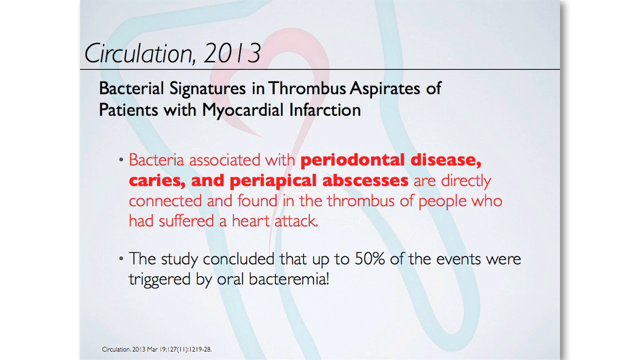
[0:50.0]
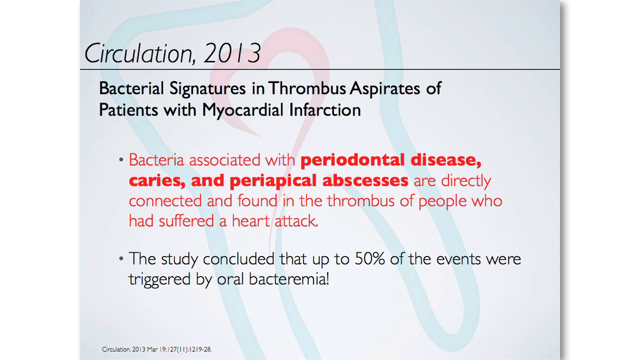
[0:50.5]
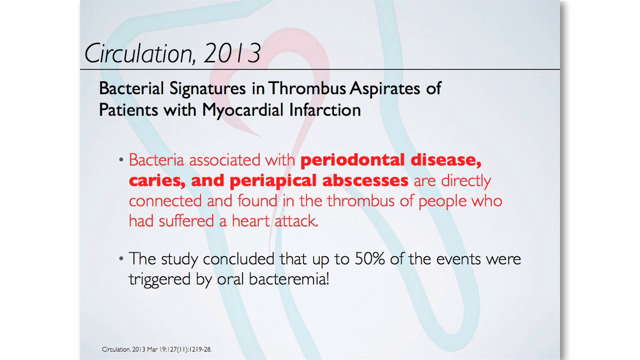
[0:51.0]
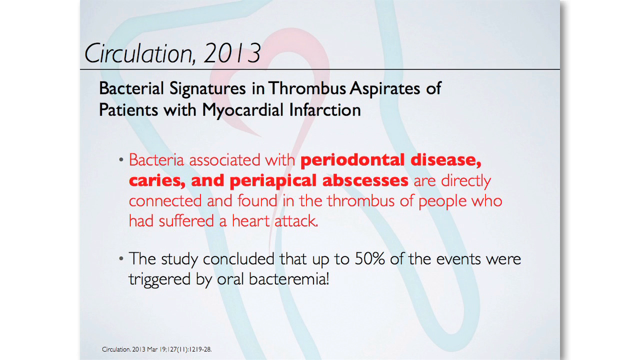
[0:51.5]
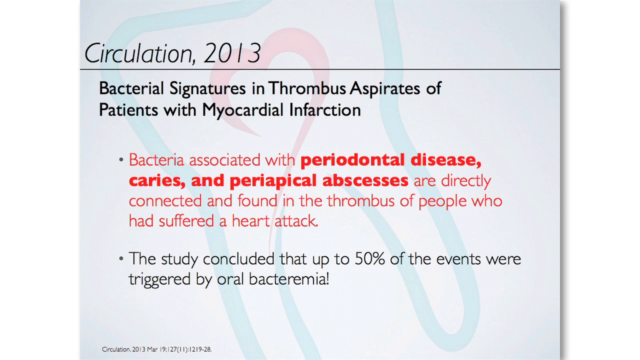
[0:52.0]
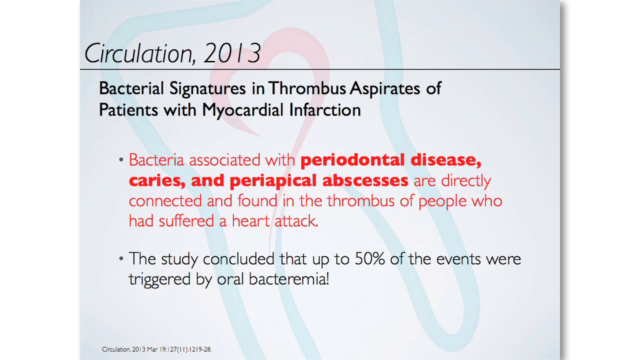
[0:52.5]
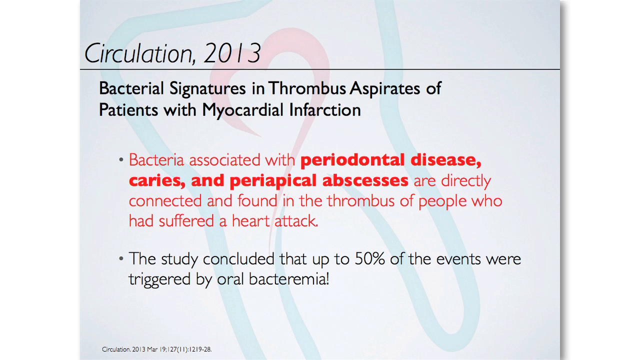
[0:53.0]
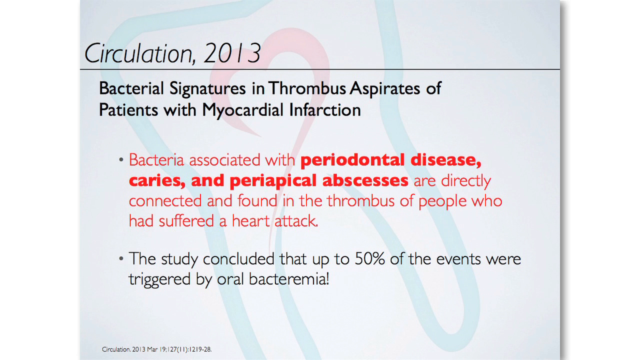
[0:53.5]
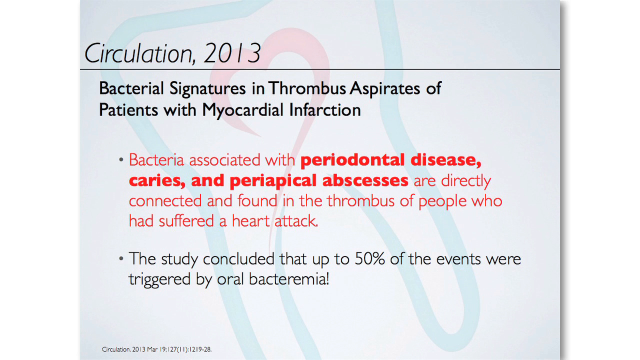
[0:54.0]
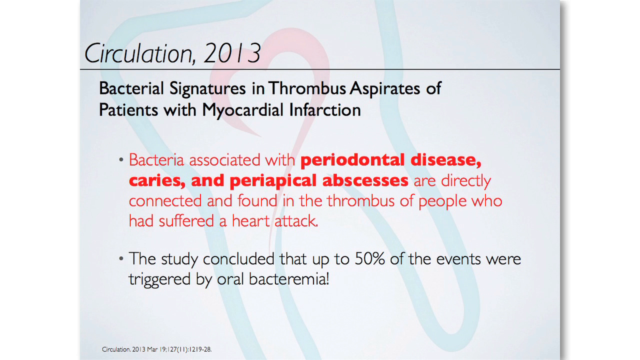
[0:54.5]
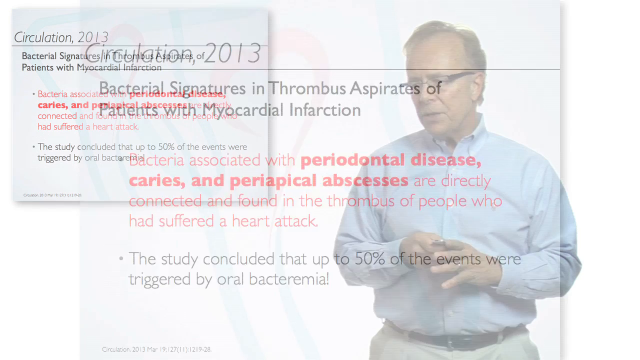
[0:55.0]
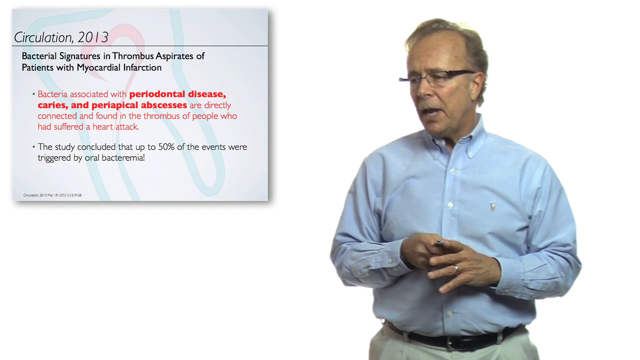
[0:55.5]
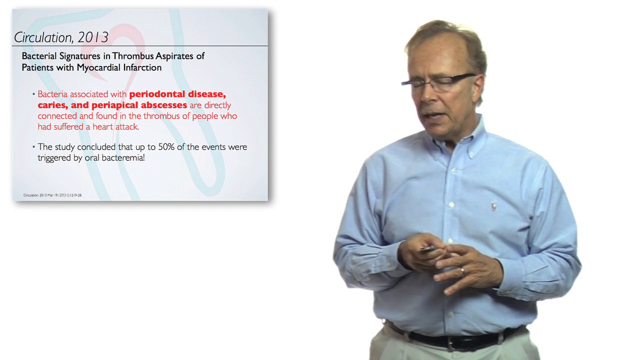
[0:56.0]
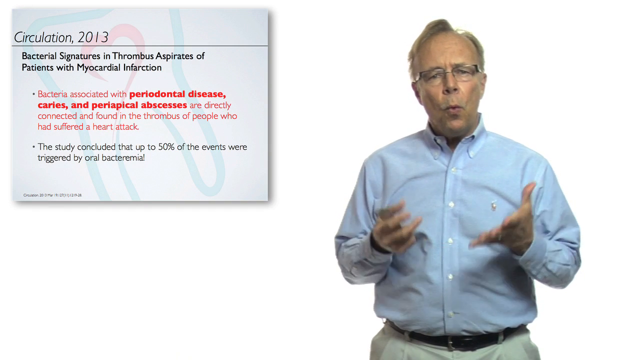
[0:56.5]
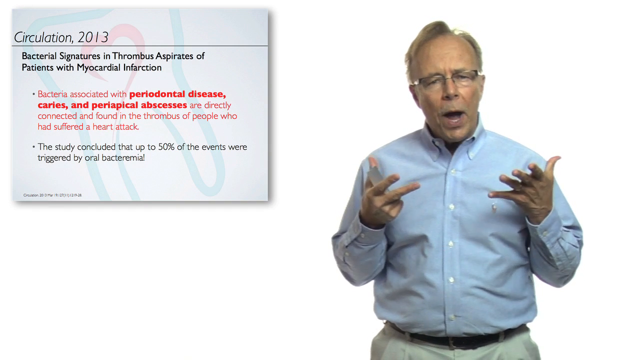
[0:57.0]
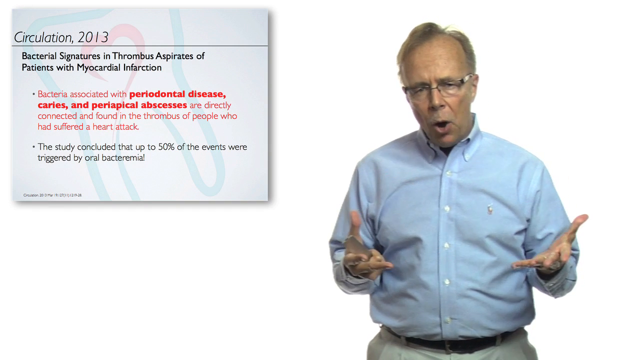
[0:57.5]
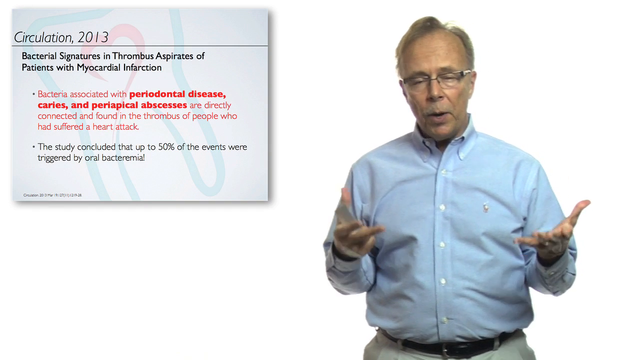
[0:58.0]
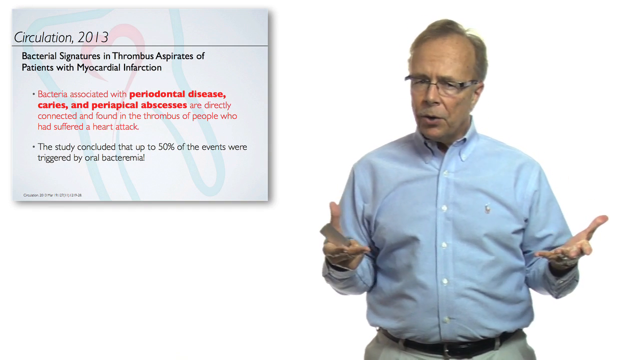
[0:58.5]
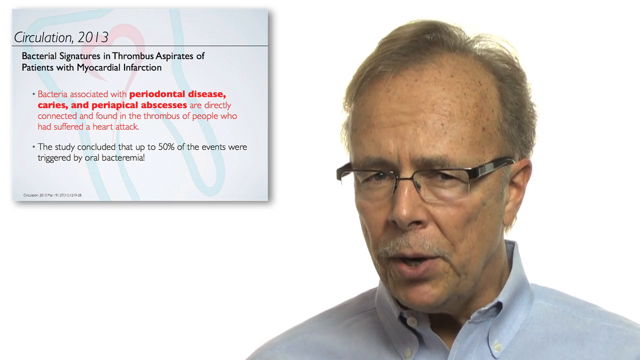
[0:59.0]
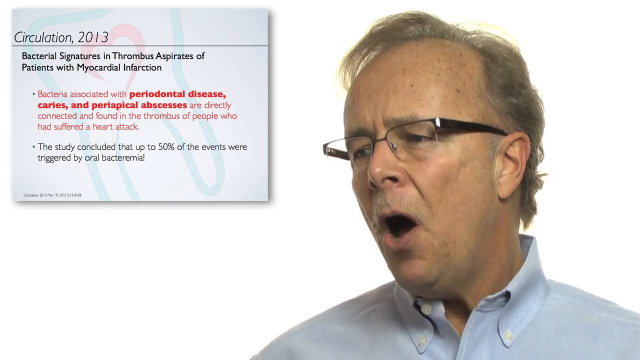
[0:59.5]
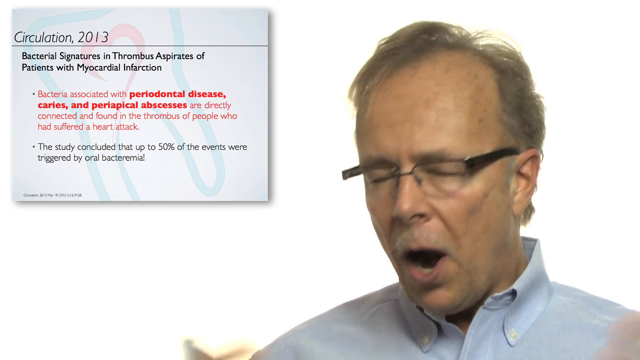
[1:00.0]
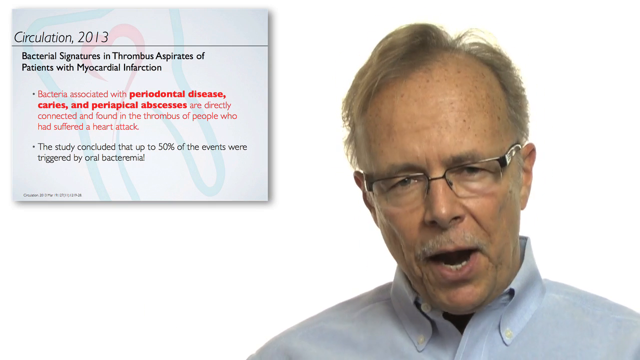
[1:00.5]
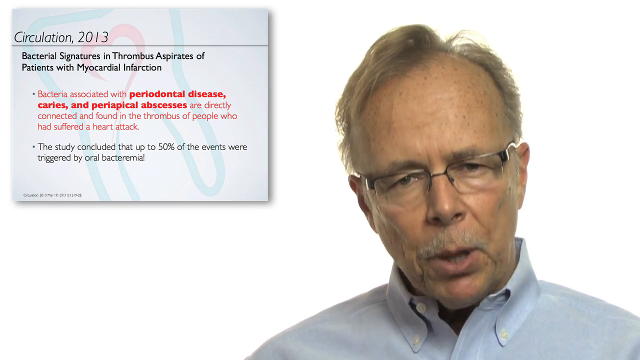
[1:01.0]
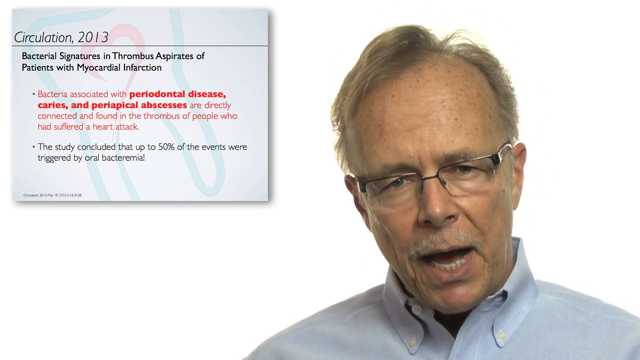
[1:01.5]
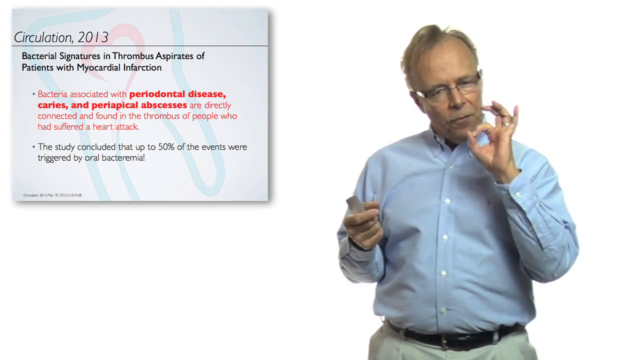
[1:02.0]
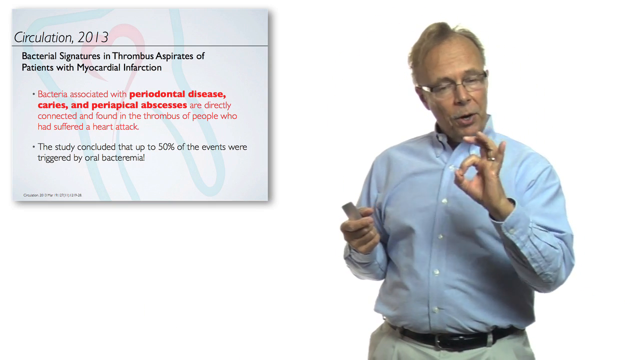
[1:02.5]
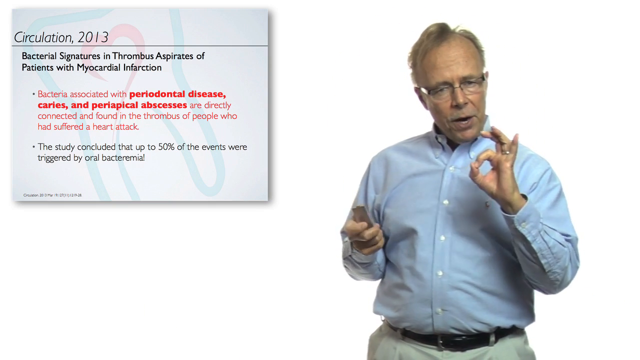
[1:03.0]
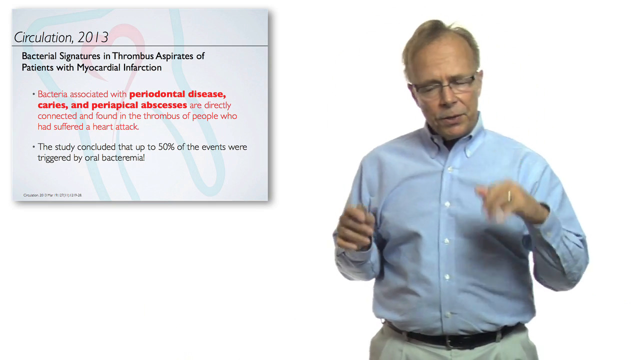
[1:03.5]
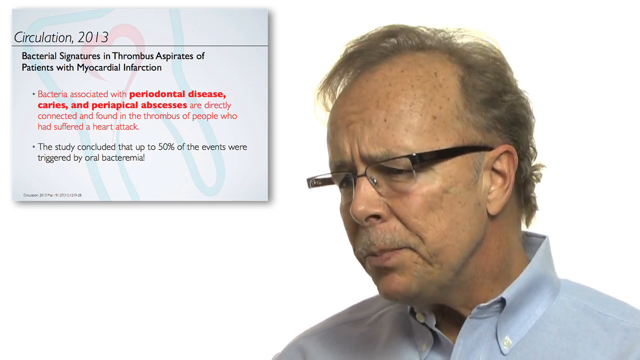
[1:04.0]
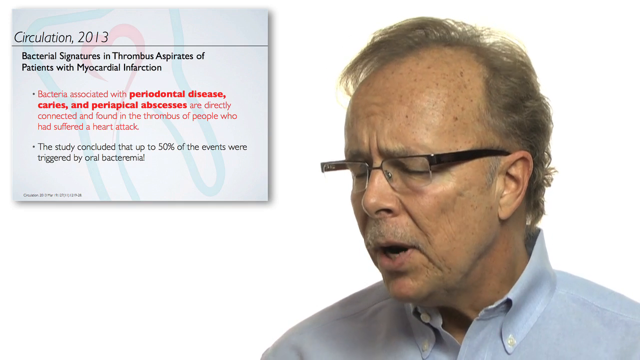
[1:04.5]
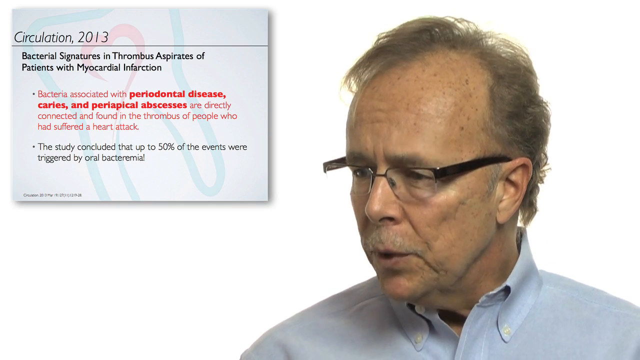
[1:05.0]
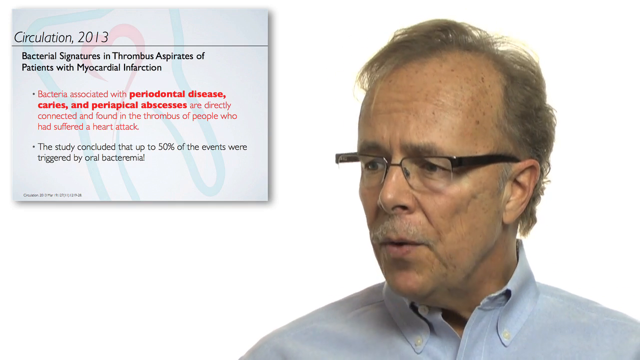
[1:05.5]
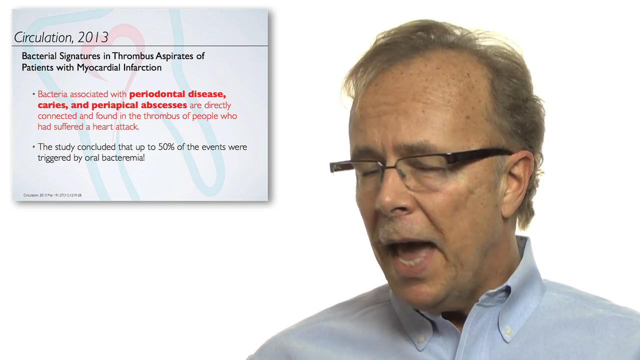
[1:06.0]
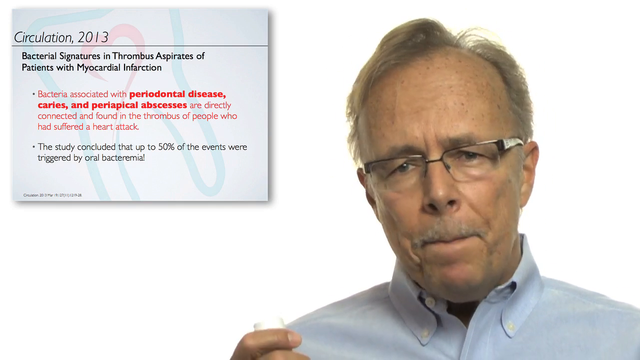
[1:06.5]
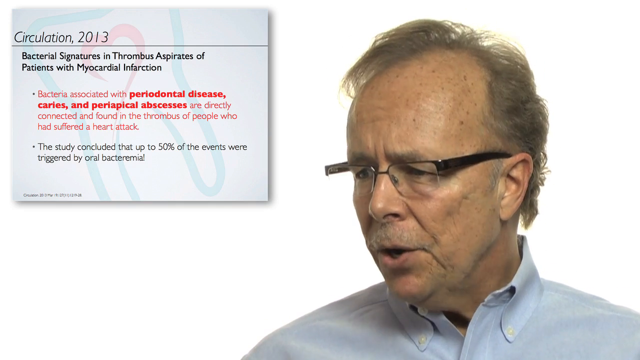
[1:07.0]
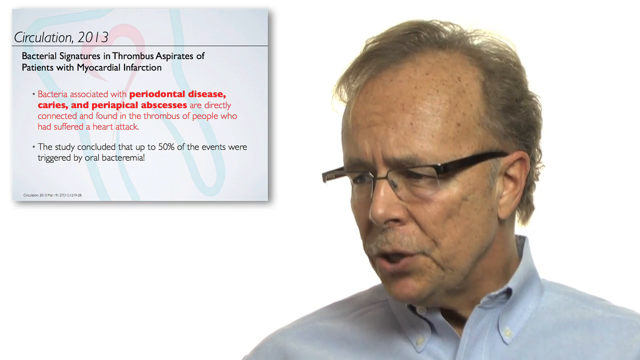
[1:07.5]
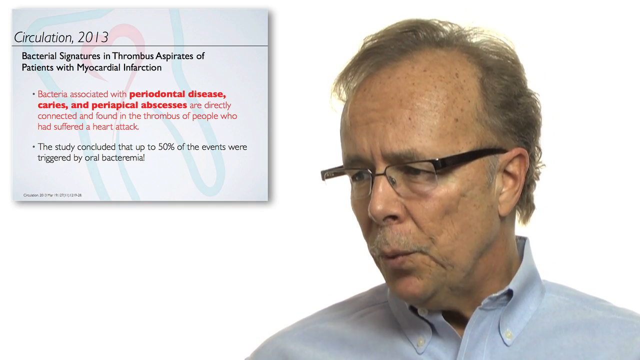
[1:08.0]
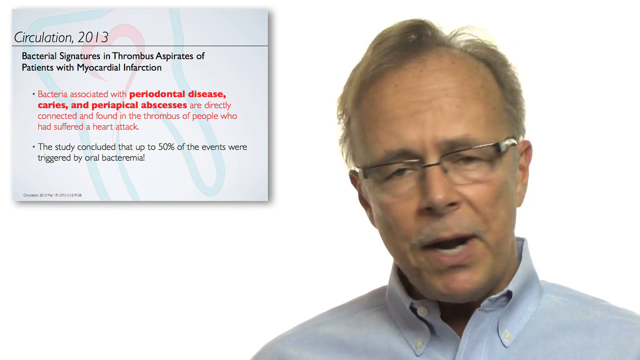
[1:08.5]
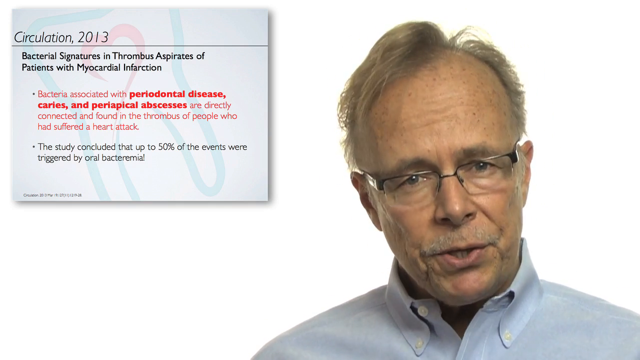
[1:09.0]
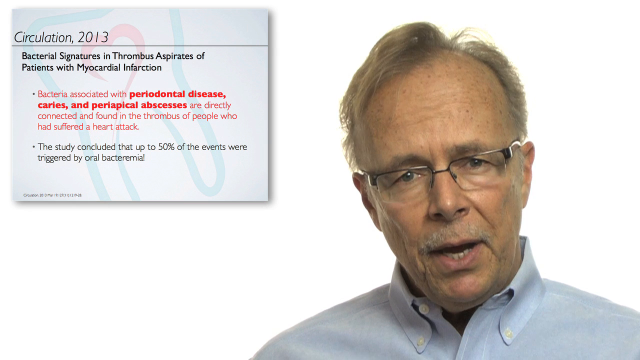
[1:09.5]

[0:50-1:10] The source on the slide also shows the number 11 in parentheses and a page number or page range of 219 to 28. The slide returns to the top left corner of the screen, and the man is visible, still talking. He appears to make an A-OK gesture with his left hand and holds his hands together a few times, continuing to hold a laser pointer in his right hand. He seems to be talking a little more slowly and frowns a little more than usual. When he turns his head, a bald spot in the middle of his head is visible. On the slide, the words "periodontal disease," "caries," and "periapical abscesses" are bold.